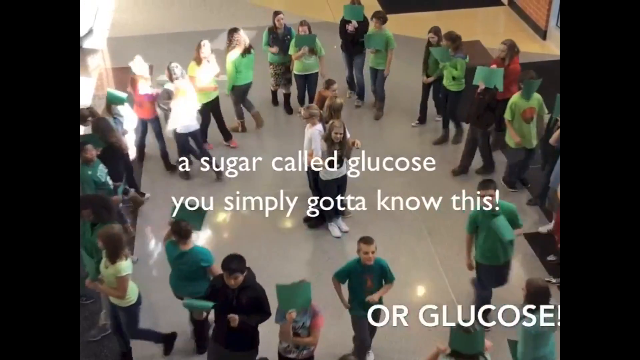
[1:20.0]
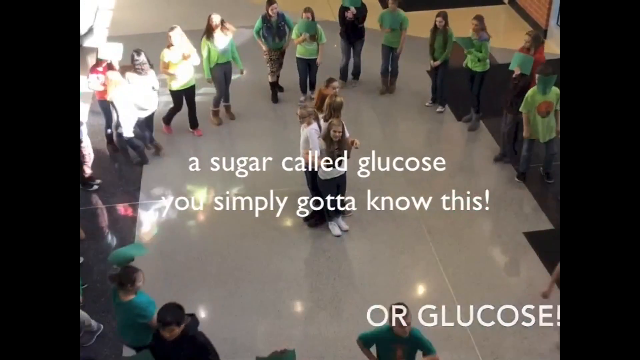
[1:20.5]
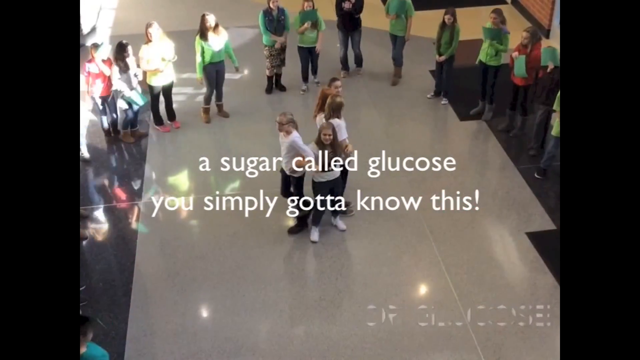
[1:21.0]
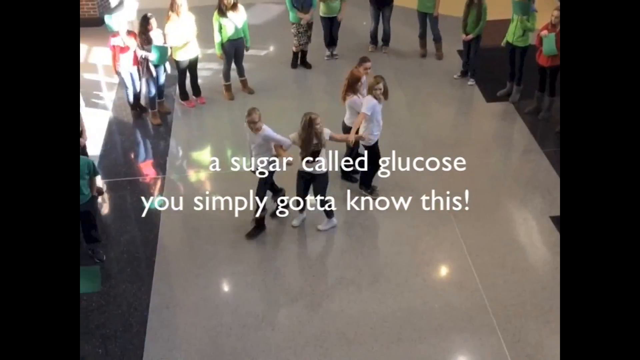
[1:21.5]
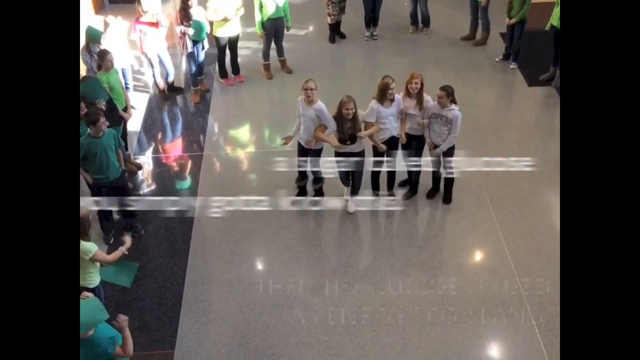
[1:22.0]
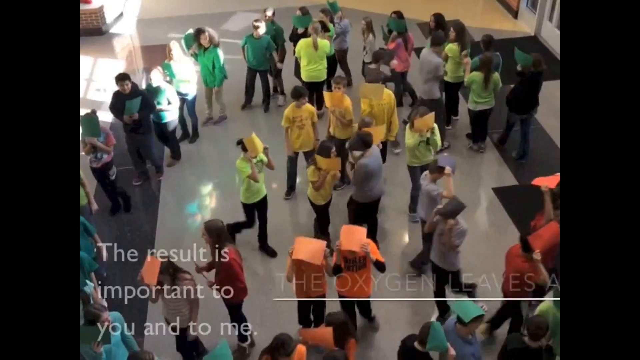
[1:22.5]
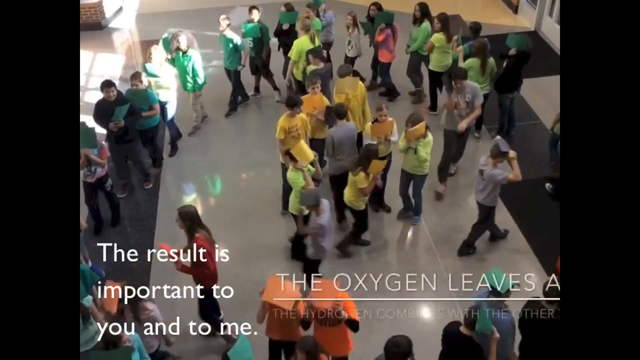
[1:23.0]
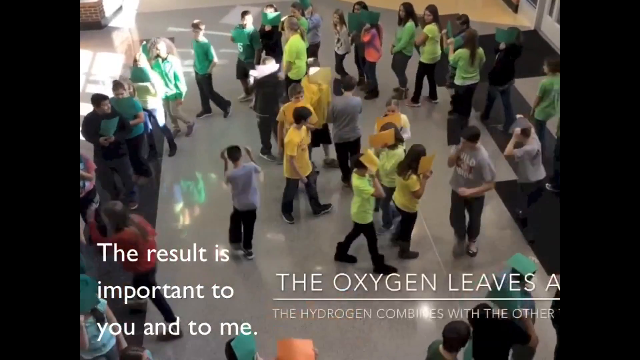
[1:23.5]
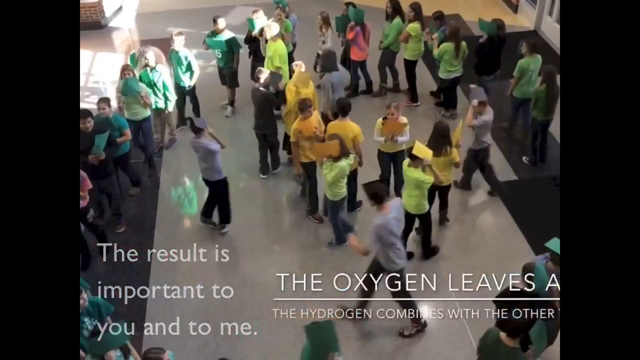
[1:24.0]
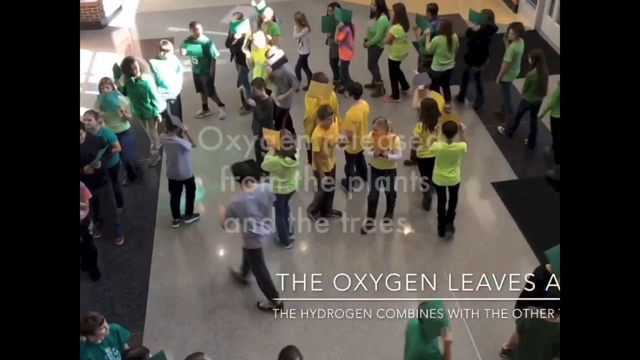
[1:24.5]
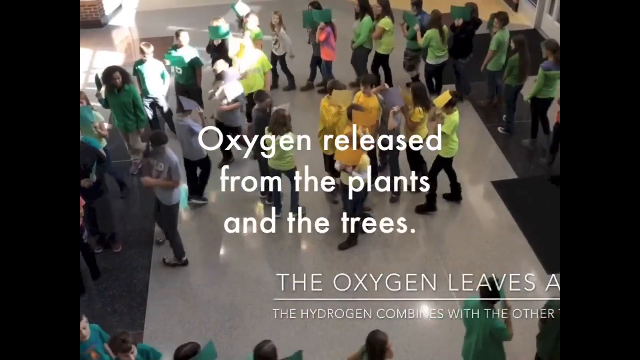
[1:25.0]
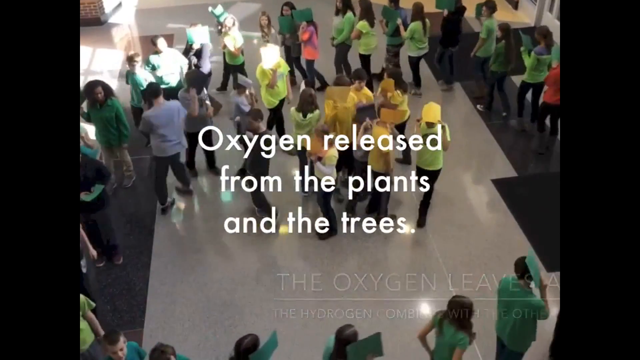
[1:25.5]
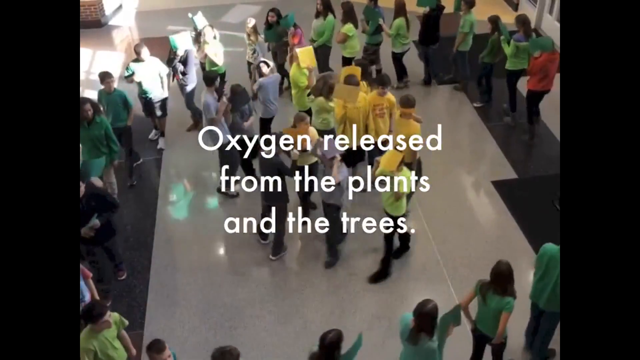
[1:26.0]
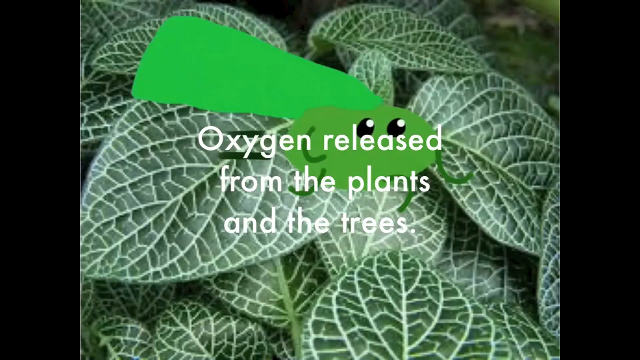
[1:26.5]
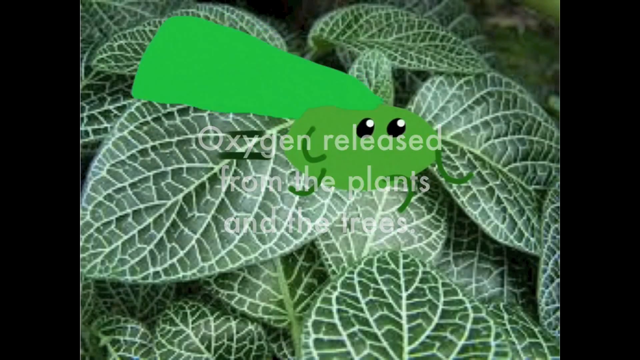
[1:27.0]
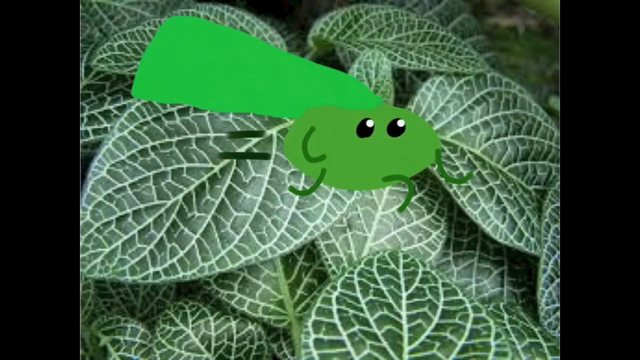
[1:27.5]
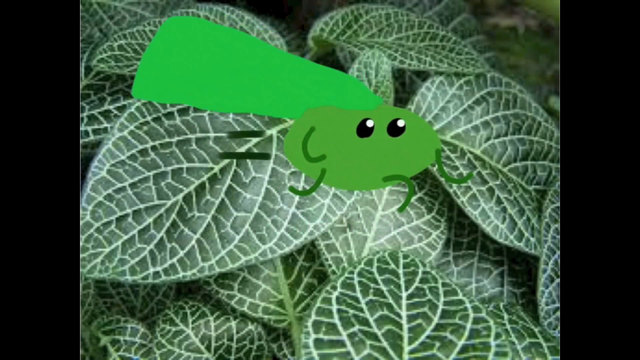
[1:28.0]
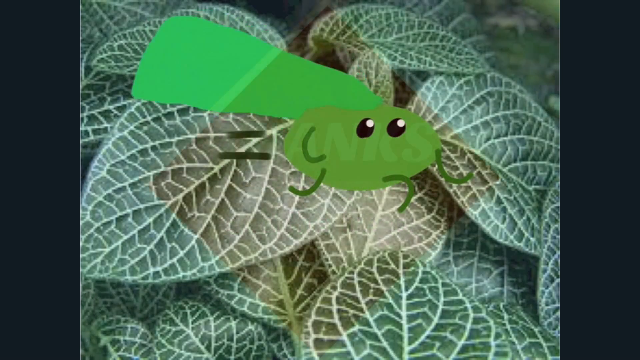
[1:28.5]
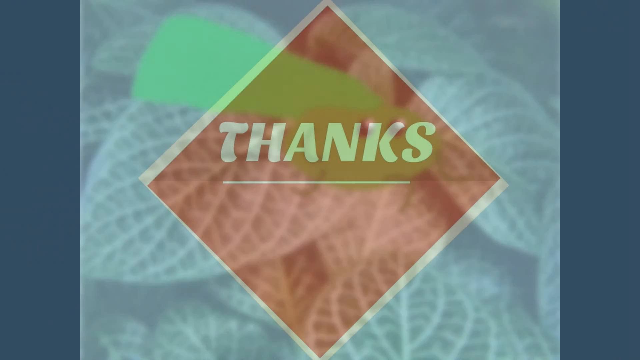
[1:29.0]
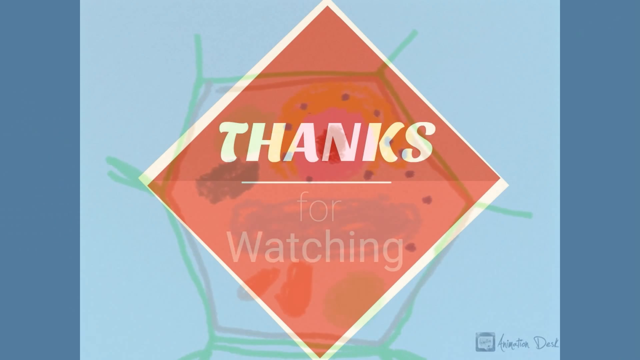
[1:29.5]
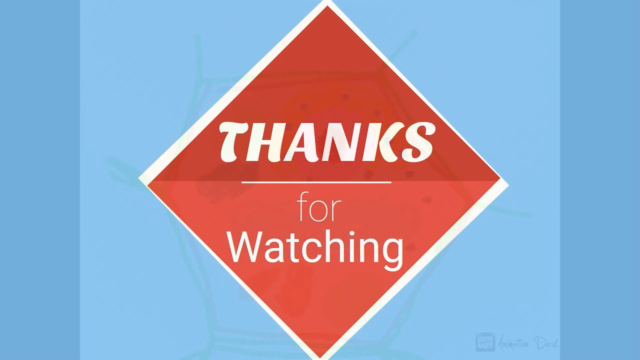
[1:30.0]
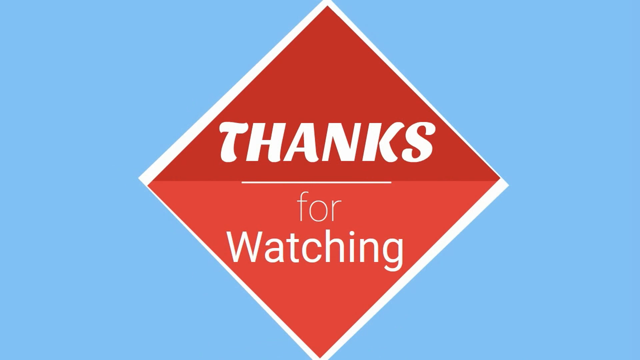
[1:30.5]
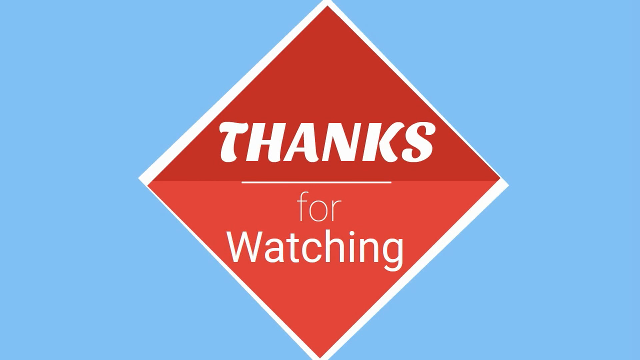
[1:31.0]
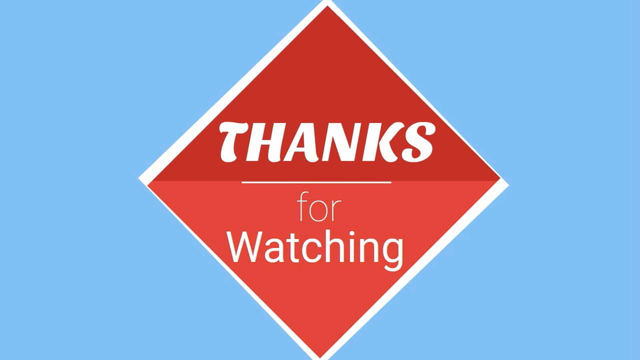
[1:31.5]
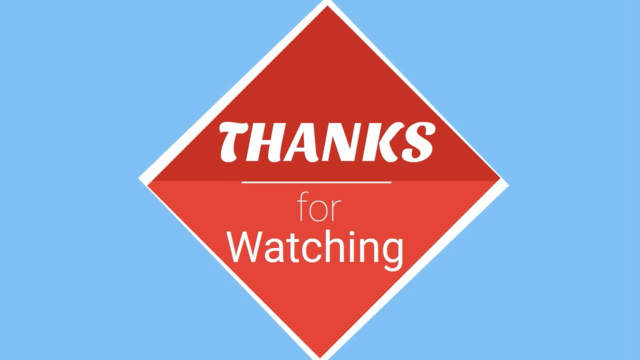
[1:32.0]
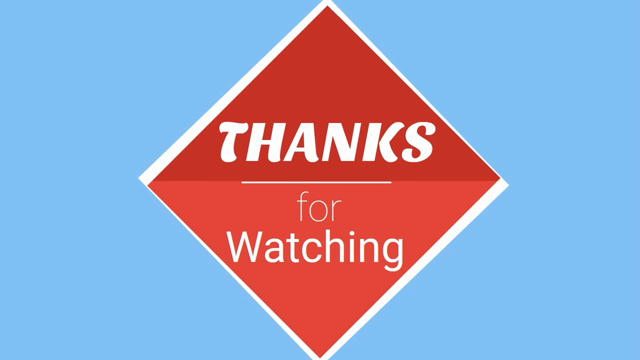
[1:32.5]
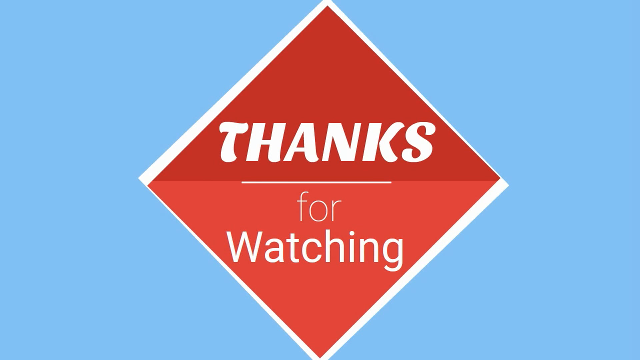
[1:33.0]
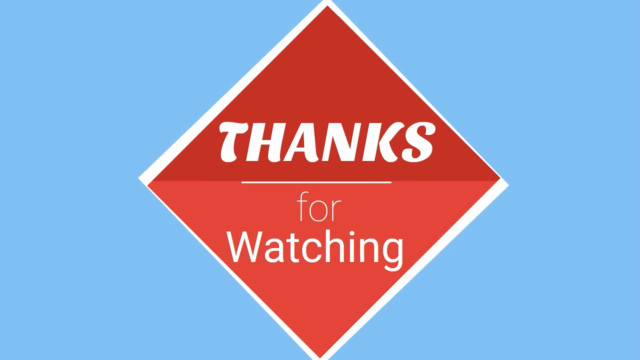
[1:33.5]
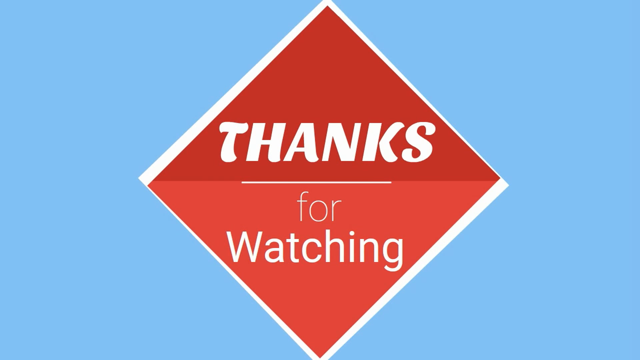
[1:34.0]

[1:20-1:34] Live-action footage shows a group of kids in a big circle around four or five kids who are linked by their arms. White text in the middle, on two lines, reads "a sugar called glucose. You simply gotta know this." The linked kids begin trying to walk outward but are held at arm's length. The video moves to another section showing different kids in shirts of various colors, including greens, light greens and yellows. Some of them hold papers and move around with the papers over their faces. White text in the bottom right begins "the oxygen leaves" and is cut off, and below it text reading "the hydrogen combines with other" is also cut off. New white text appears in the middle of the screen: "oxygen released from the plants and the trees." Another Coral Blast graphic follows. Then a big red triangle appears on a blue background with white text reading "thanks for watching."